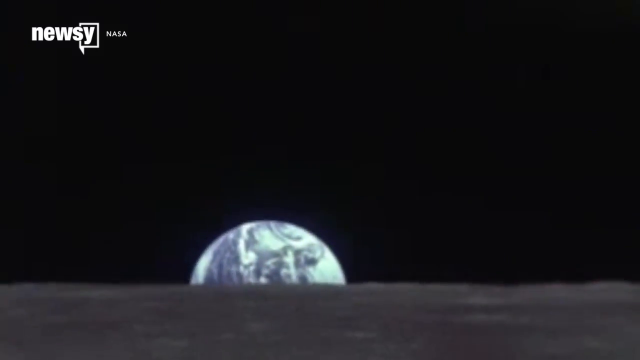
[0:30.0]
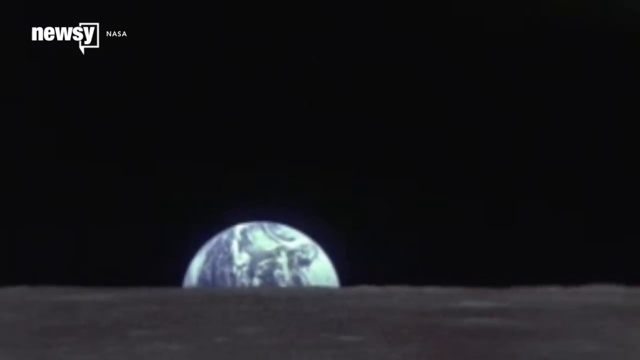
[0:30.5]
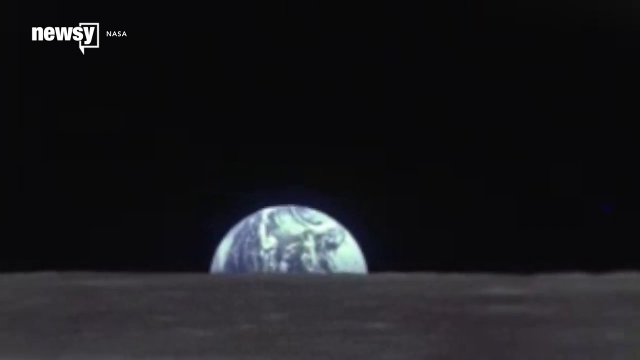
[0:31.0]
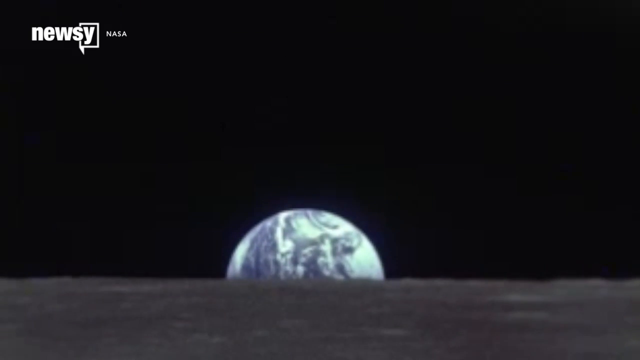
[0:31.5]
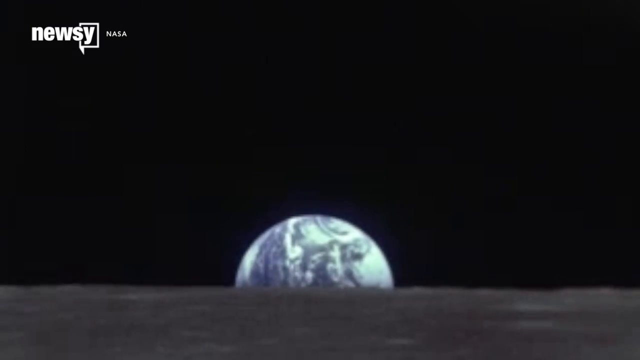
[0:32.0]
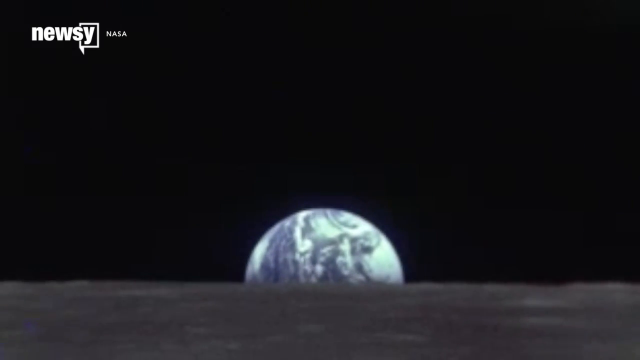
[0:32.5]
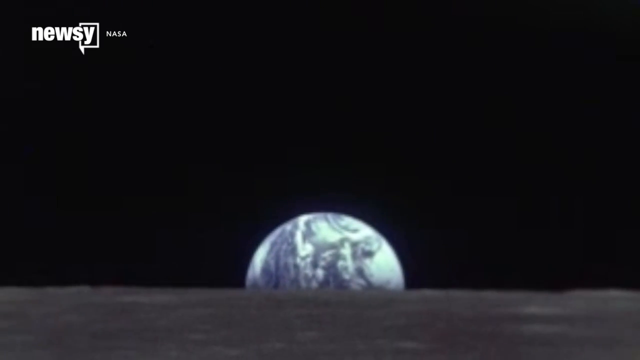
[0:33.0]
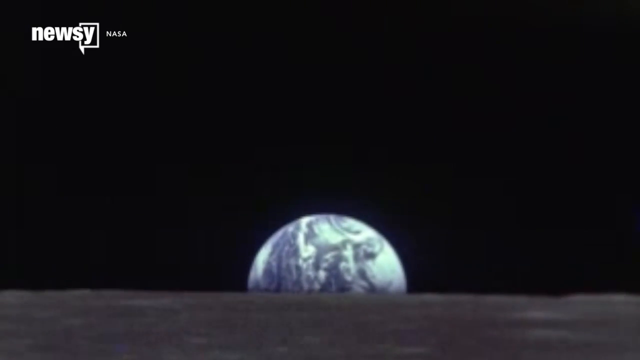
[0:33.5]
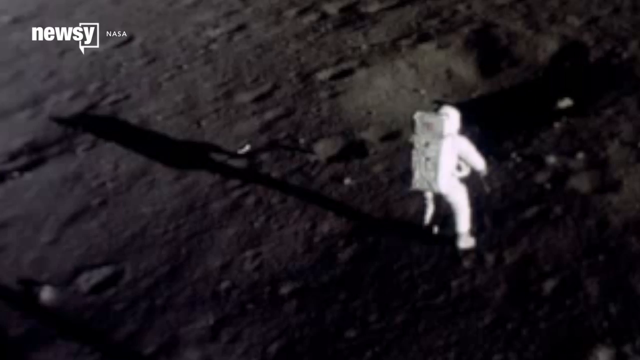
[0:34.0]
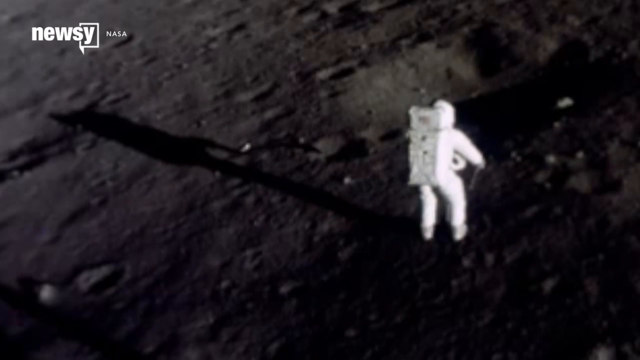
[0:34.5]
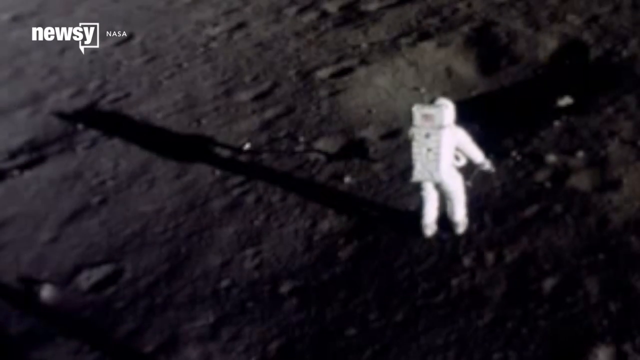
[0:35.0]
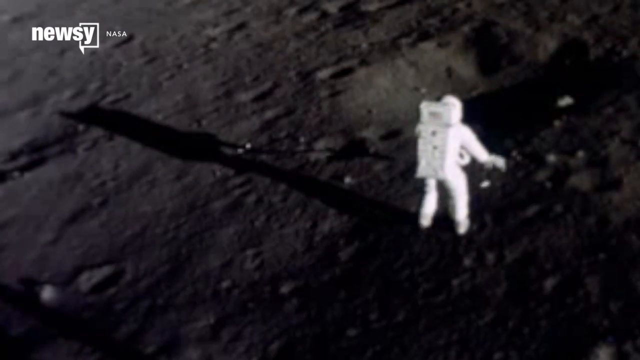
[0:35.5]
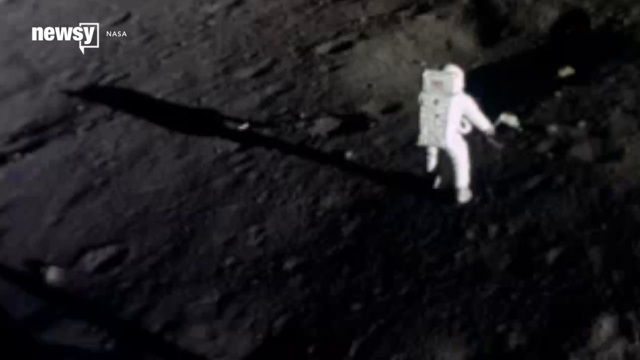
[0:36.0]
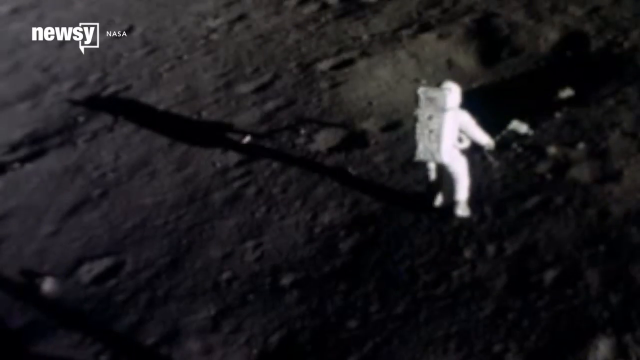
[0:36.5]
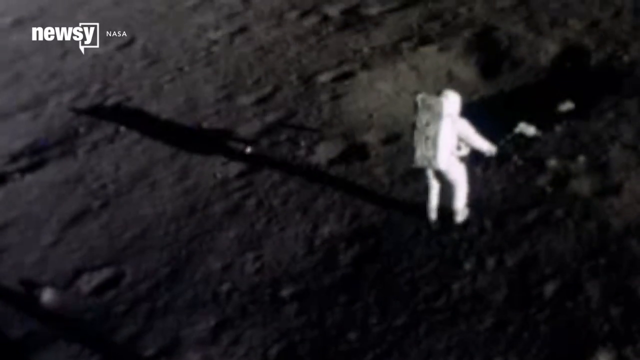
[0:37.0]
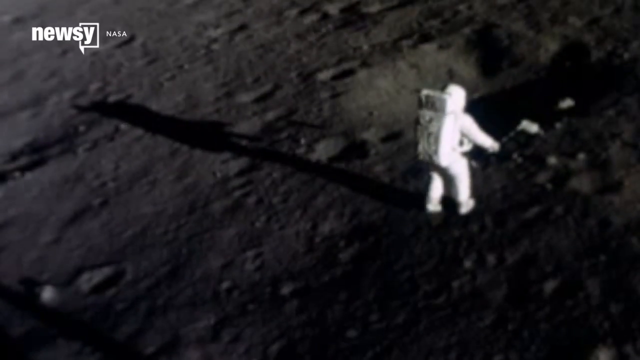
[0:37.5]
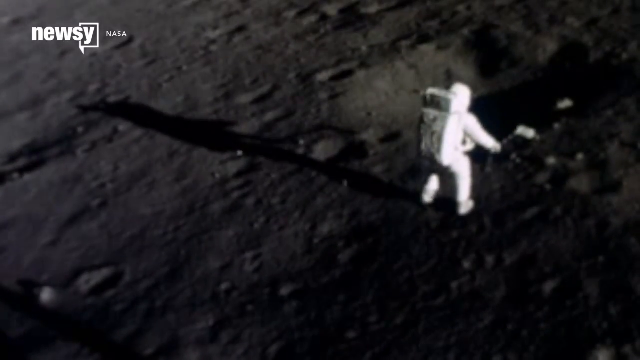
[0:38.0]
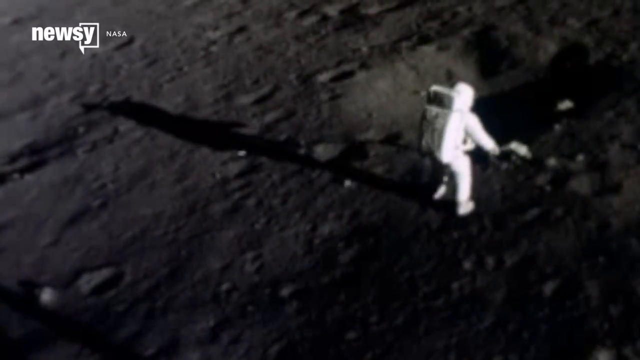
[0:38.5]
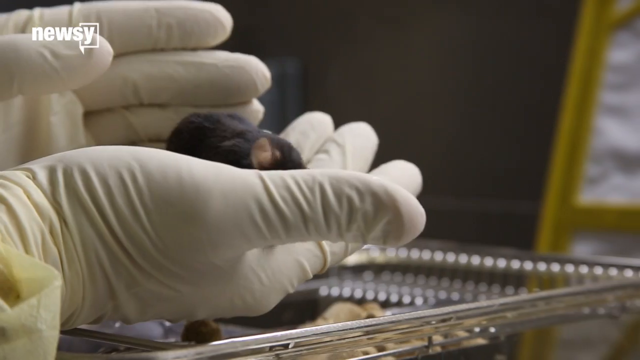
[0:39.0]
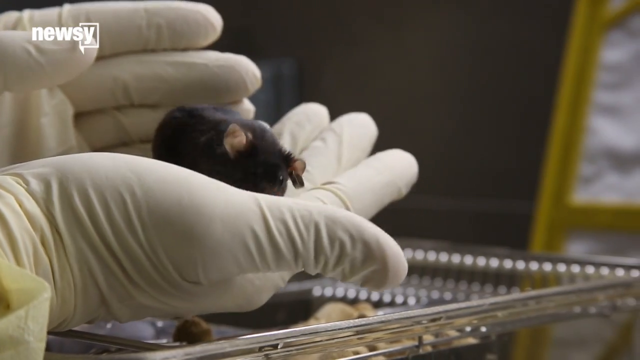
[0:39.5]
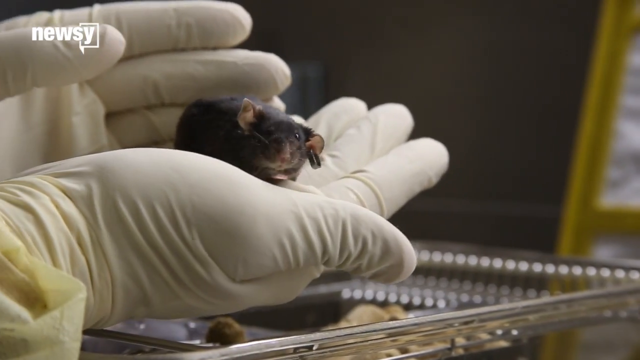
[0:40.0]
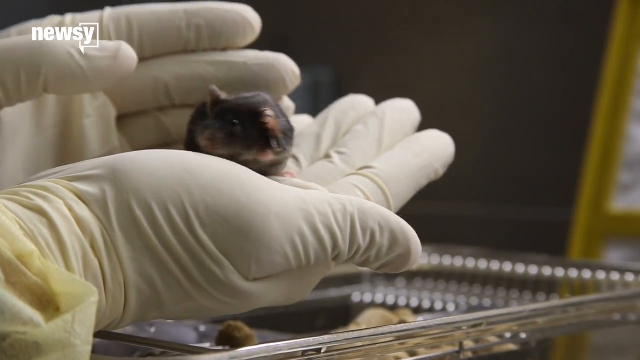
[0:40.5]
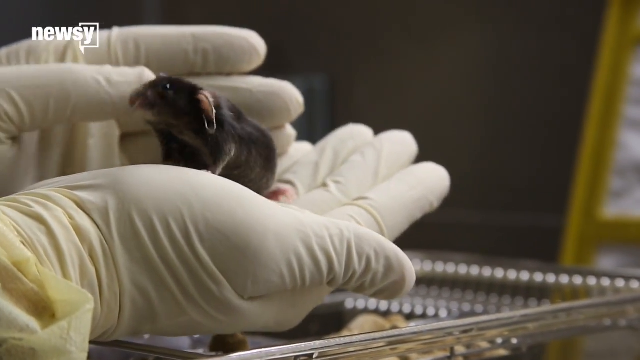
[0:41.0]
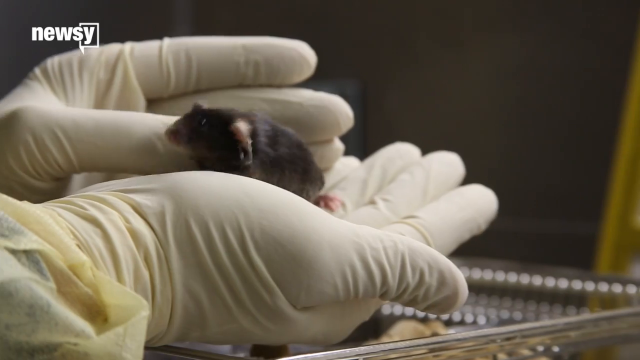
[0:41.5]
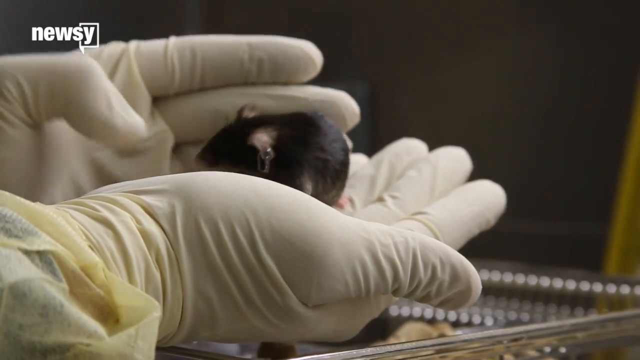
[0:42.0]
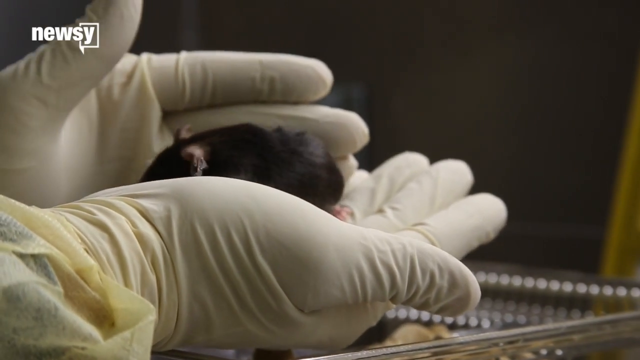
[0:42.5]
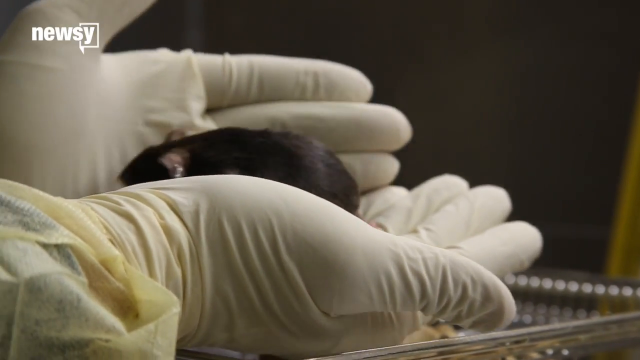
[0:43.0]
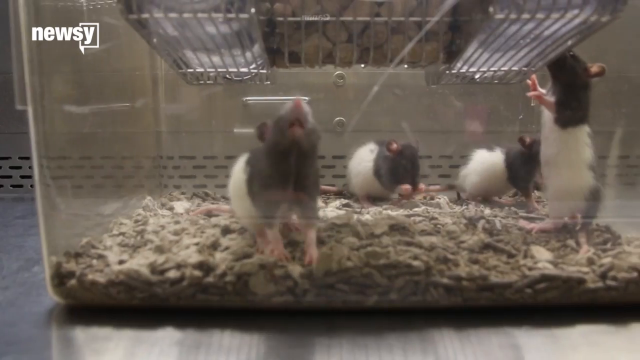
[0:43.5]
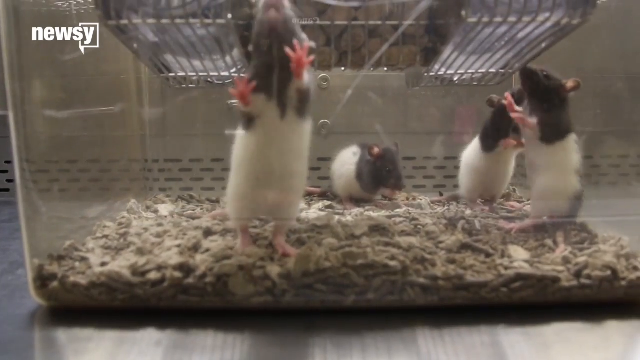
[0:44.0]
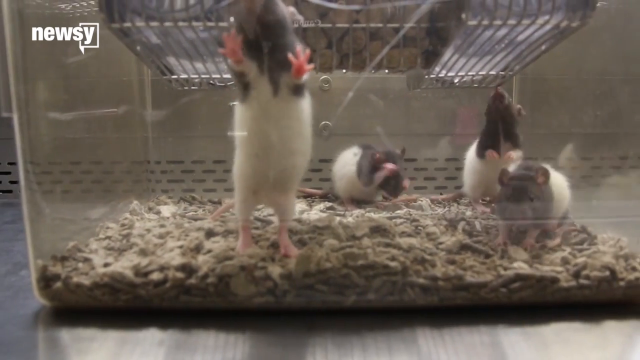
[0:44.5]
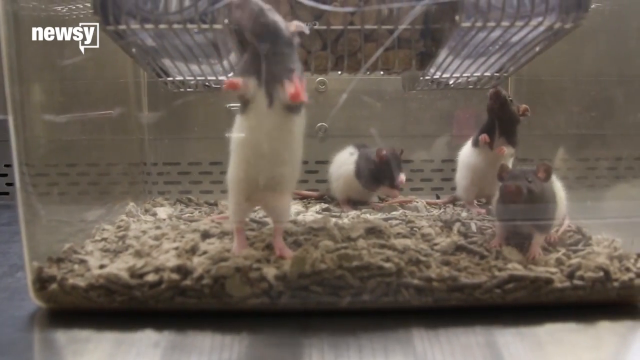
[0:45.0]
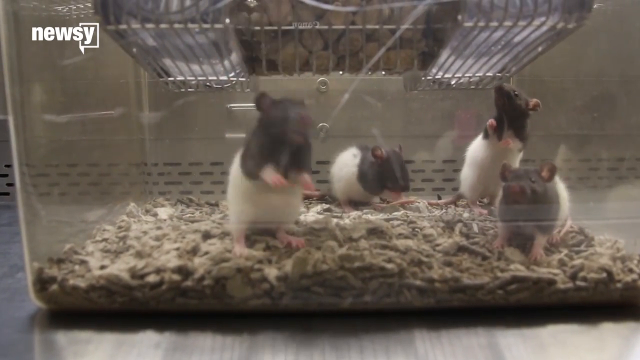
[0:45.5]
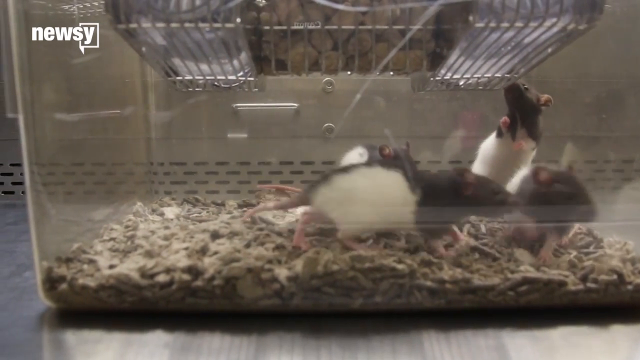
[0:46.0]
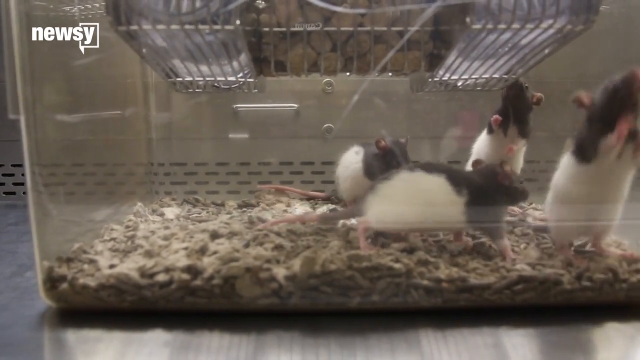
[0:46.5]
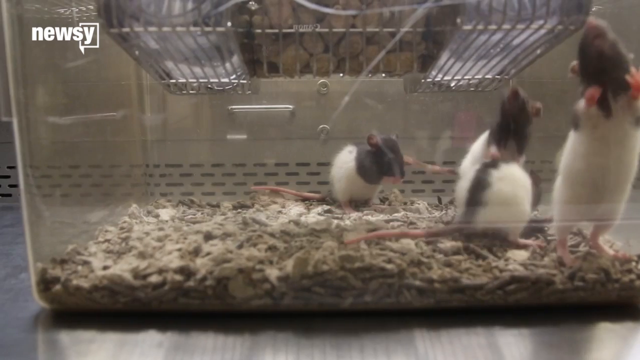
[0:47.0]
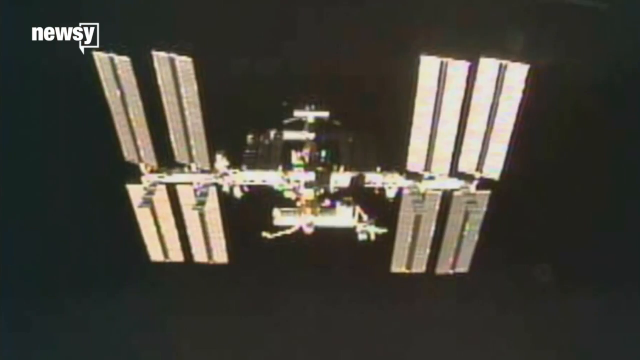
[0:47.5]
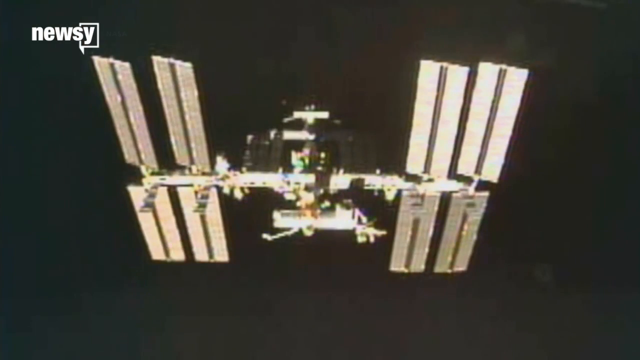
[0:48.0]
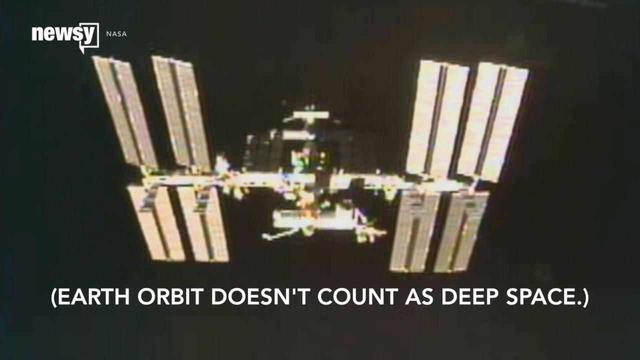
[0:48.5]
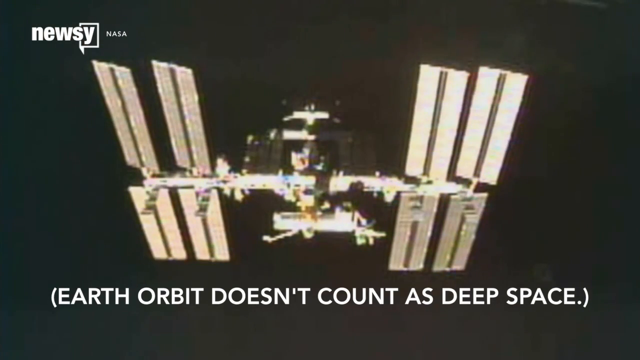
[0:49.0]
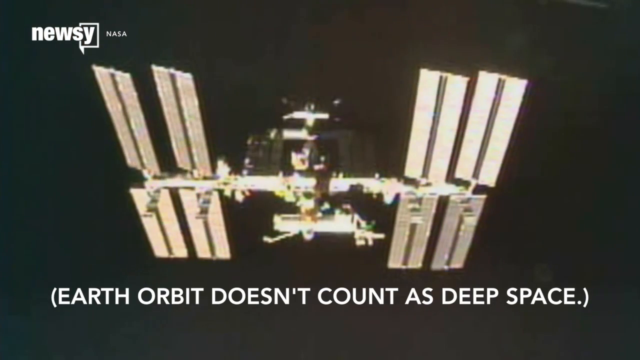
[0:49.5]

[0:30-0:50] In this Newsy video, what looks like it could be the Earth is seen from the moon, where astronauts have landed. An aerial view looks down at an astronaut walking on the surface of the moon. Next, a person's hands are covered in white latex gloves, with a tiny mouse crawling in one of them. A little cage follows, holding four other mice that are black and white. Then a spaceship appears with the text "Earth orbit doesn't count as deep space." The view looks at the underbelly of the vehicle, which looks almost like it has slots like skis: four or five slots of wood together, with the chassis of the machine in the middle.